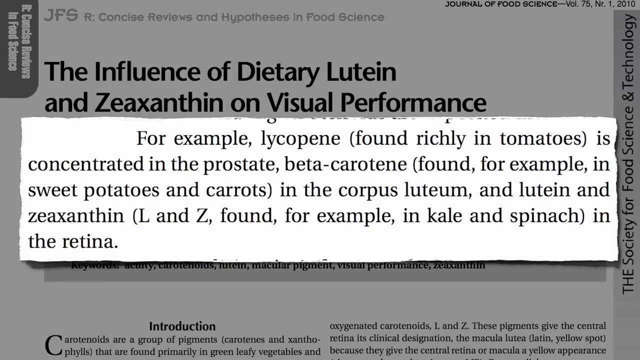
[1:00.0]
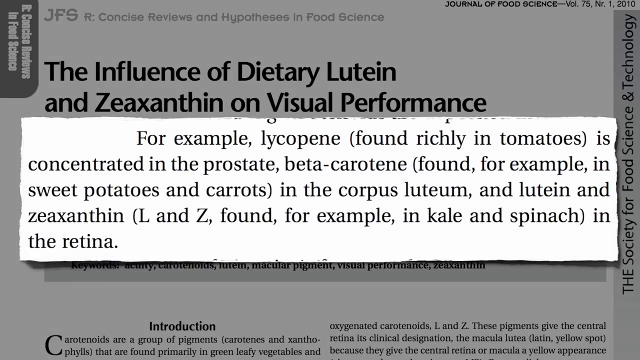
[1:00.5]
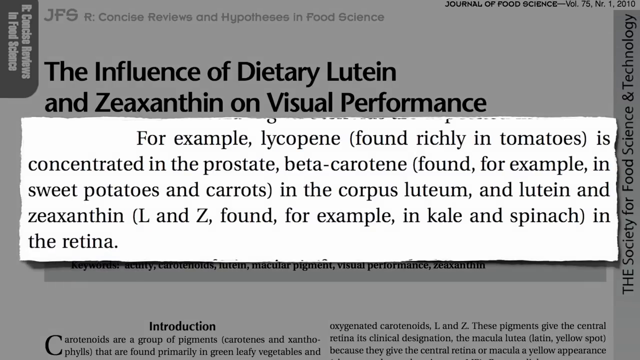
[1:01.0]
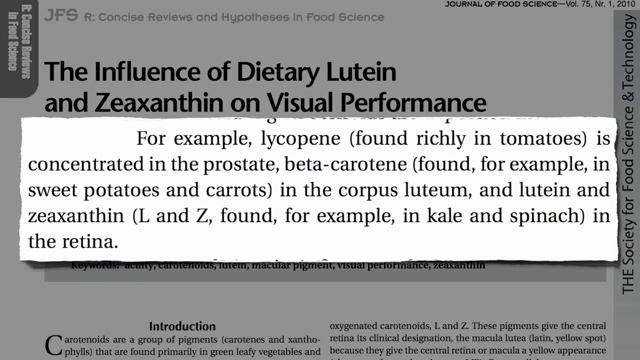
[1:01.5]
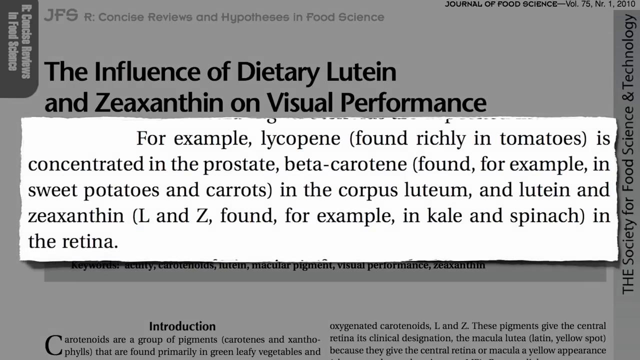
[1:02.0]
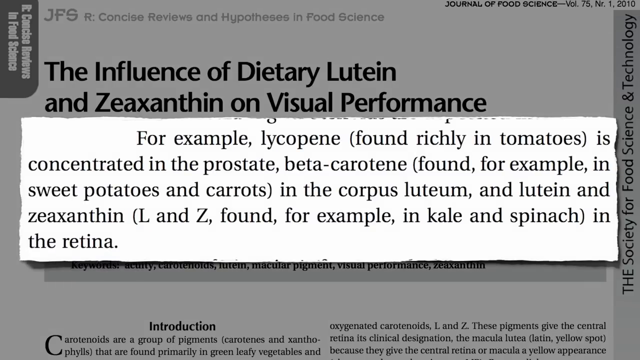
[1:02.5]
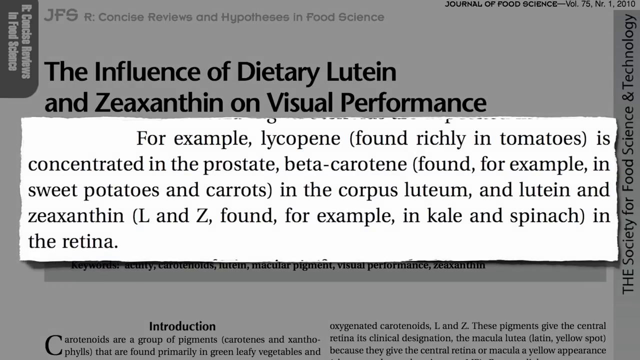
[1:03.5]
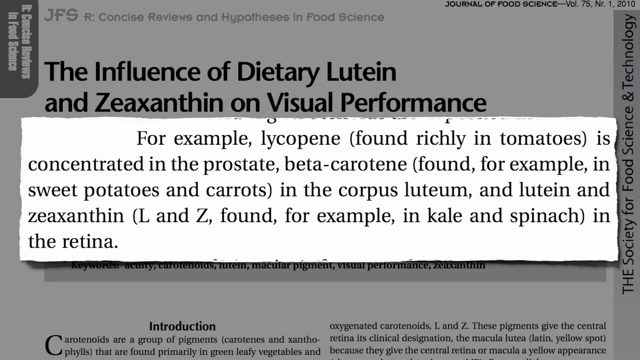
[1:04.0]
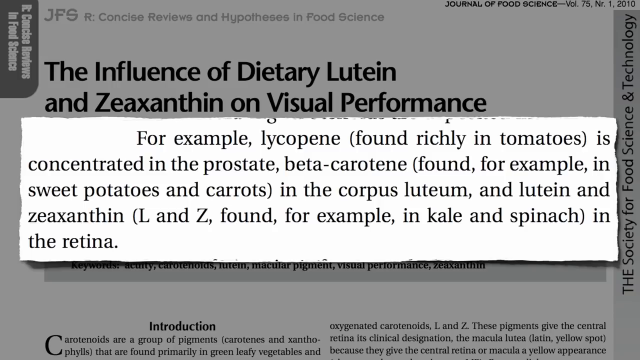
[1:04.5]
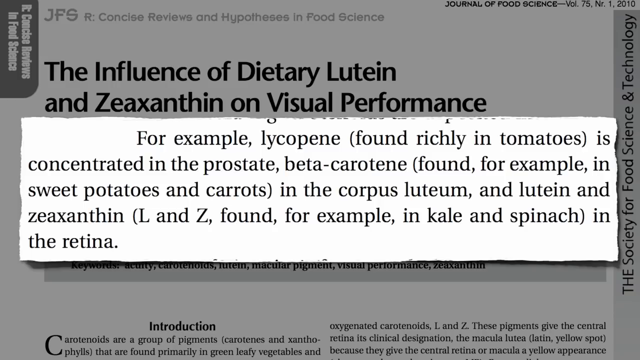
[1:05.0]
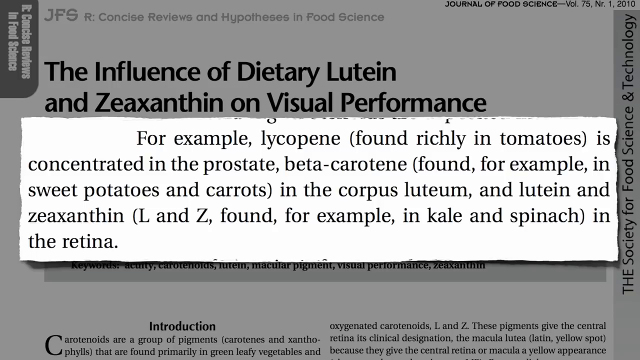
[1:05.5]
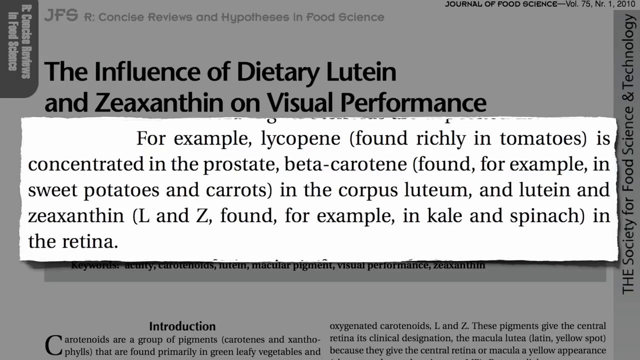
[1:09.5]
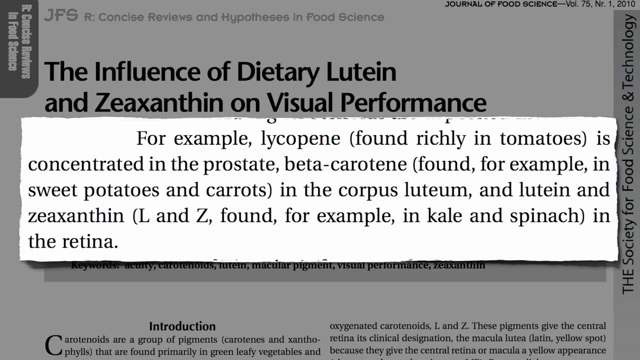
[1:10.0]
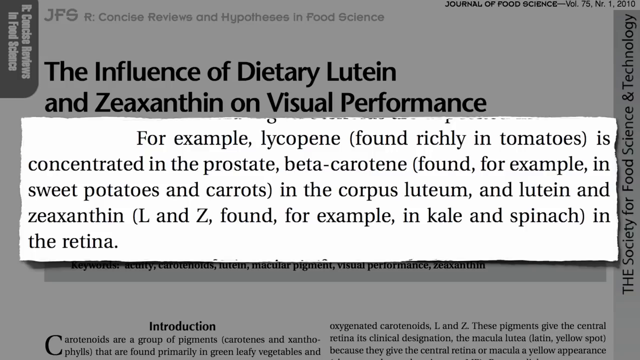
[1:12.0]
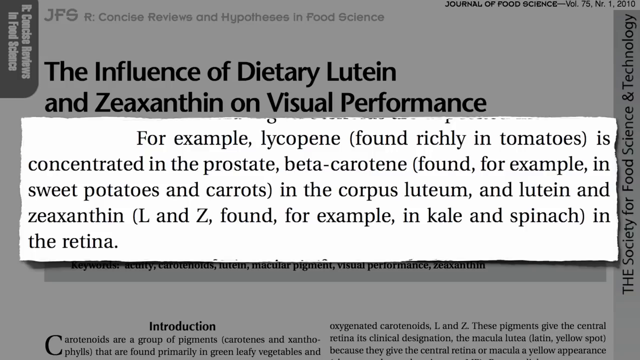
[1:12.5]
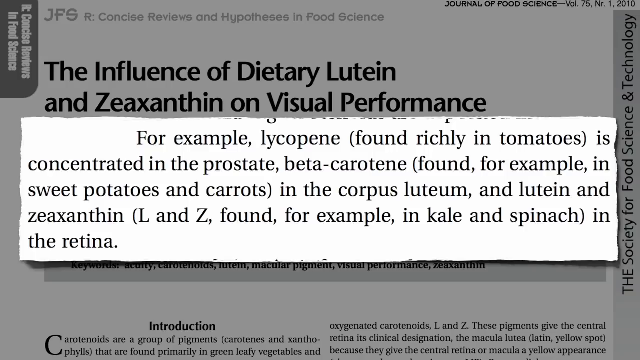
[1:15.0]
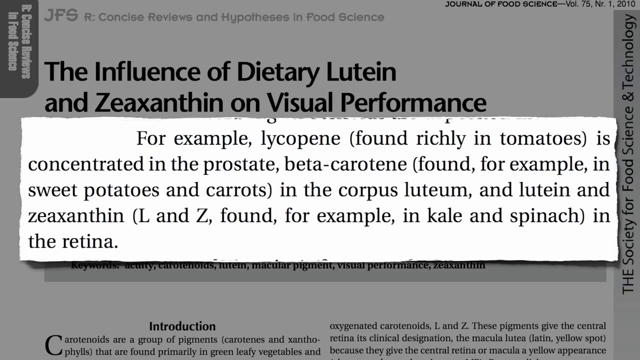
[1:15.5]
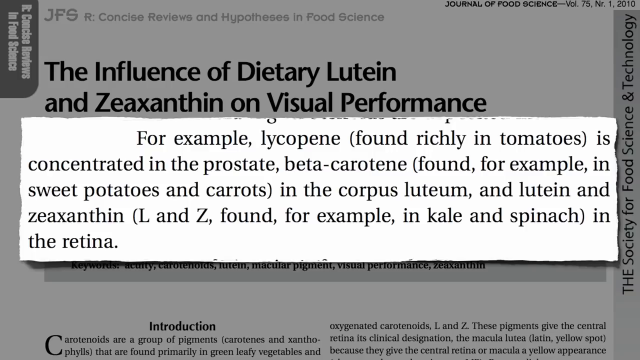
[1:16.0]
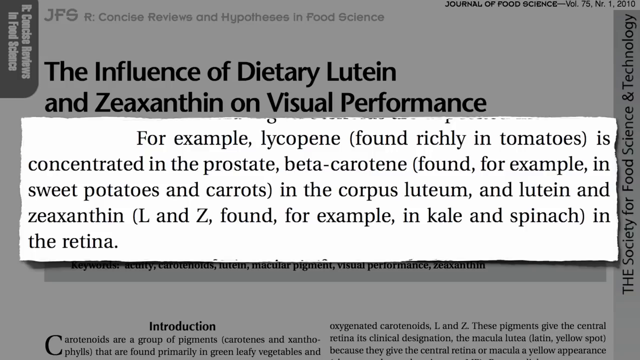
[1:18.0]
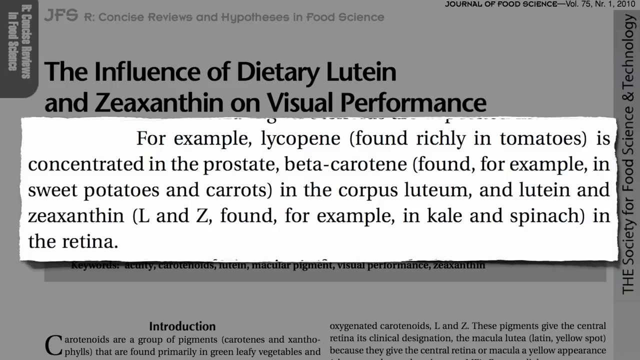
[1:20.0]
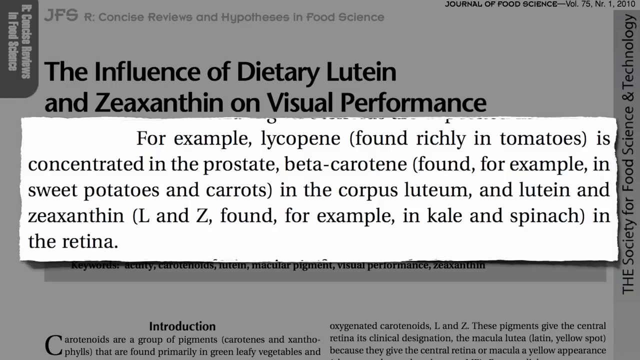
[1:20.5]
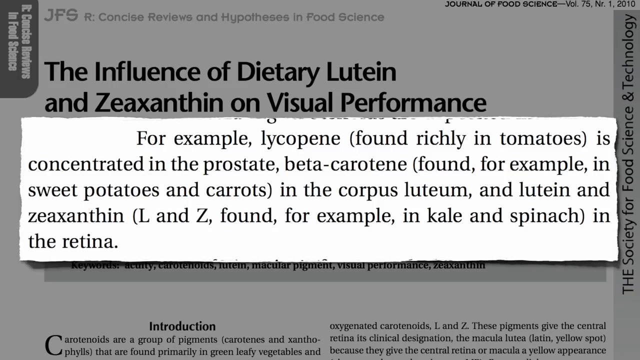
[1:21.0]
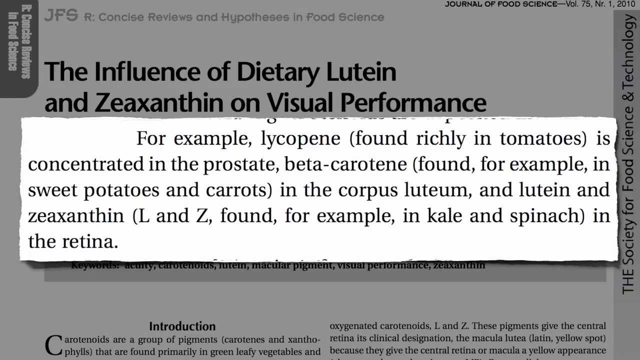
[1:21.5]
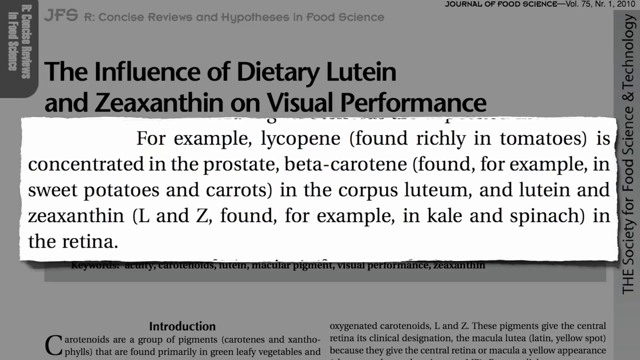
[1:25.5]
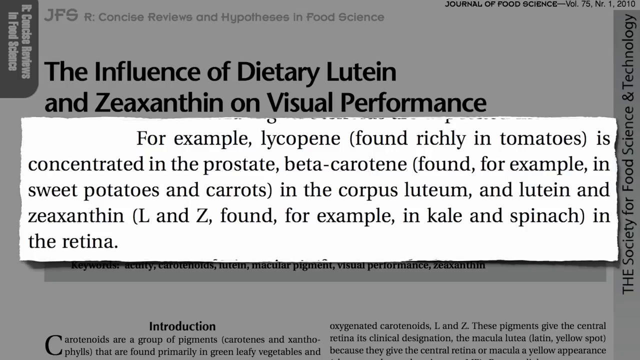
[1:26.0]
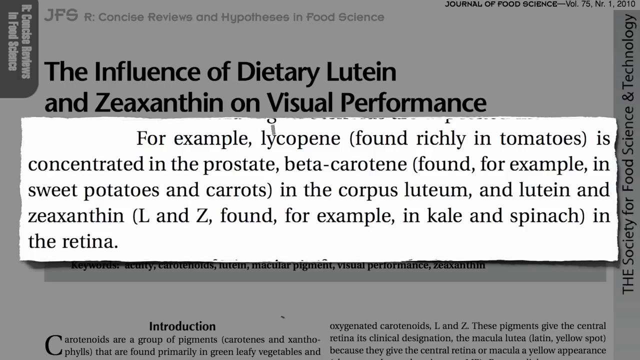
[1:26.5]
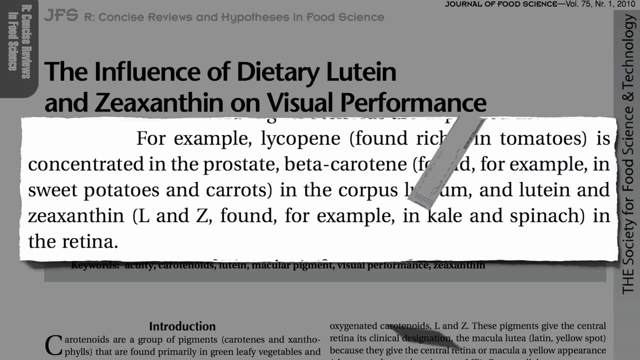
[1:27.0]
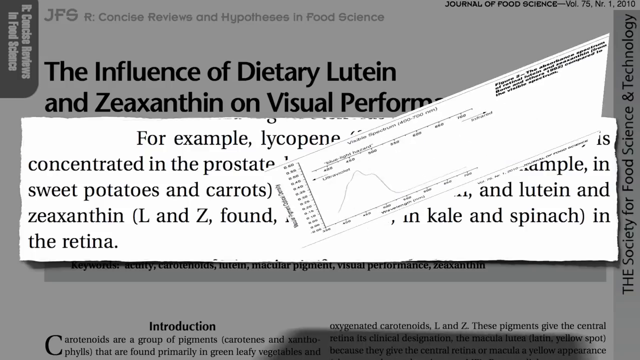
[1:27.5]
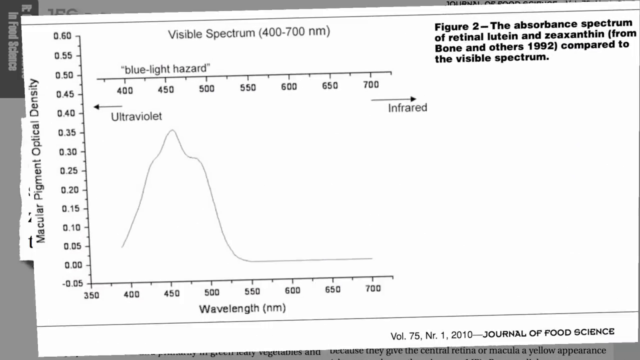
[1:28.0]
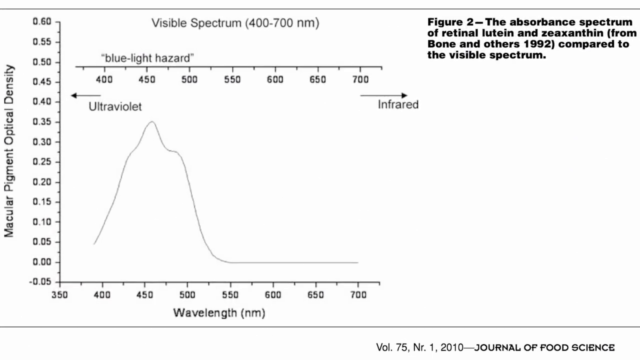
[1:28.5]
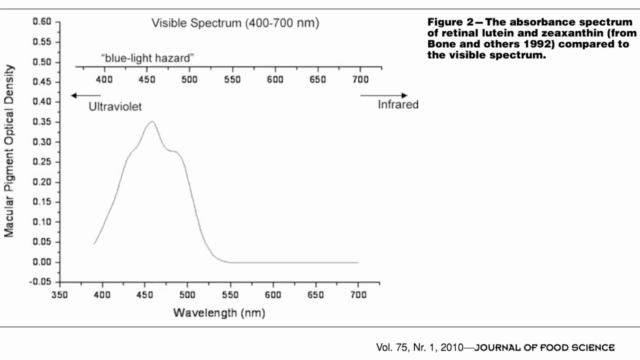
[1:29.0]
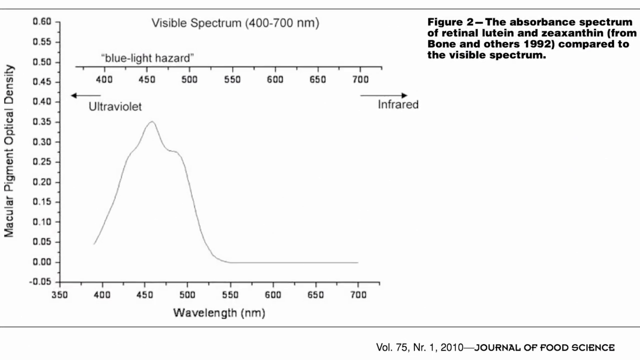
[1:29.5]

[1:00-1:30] An article titled "The Influence of Dietary Lutein and Zeaxanthin on Visual Performance" is covered by a gray shade, and over that is a cutout of an article with text that reads, "for example, lycopene, found richly in tomatoes, is concentrated in the prostate. Beta carotene, found, for example, in sweet potatoes and carrots. In the corpus, luteum and lutein, and zeaxanthin. L and Z, found, for example, in kale and spinach. In the retina." The article appears to be in the Journal of Food Science, volume seventy-five. The page heading includes the words "concise reviews and hypotheses", and a banner on the right side reads "the Society for Food Science and Technology." The article has a gray shade over it, with a clipping from an article, or from that article, superimposed on top.